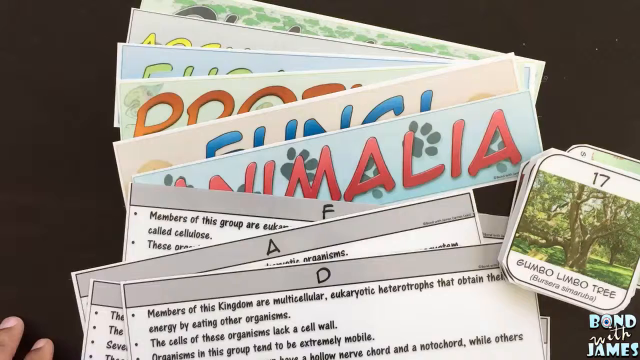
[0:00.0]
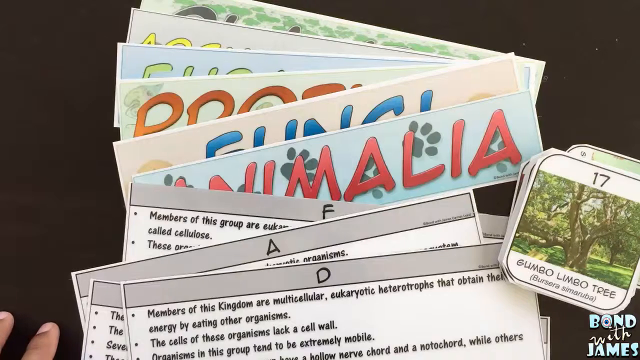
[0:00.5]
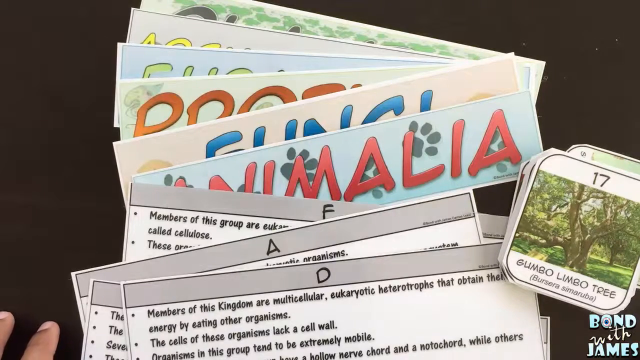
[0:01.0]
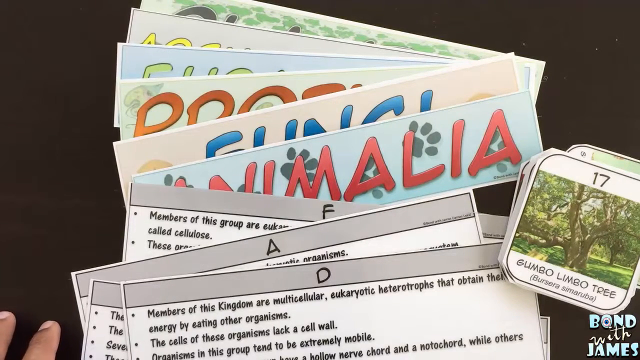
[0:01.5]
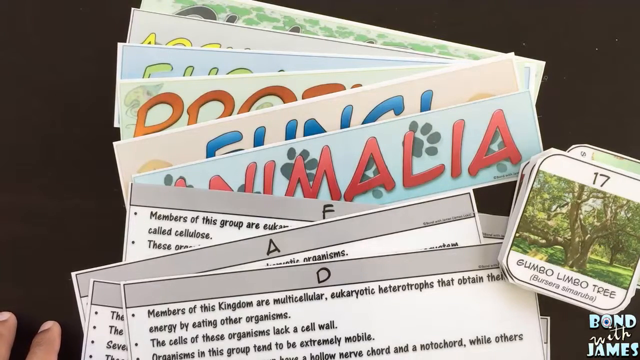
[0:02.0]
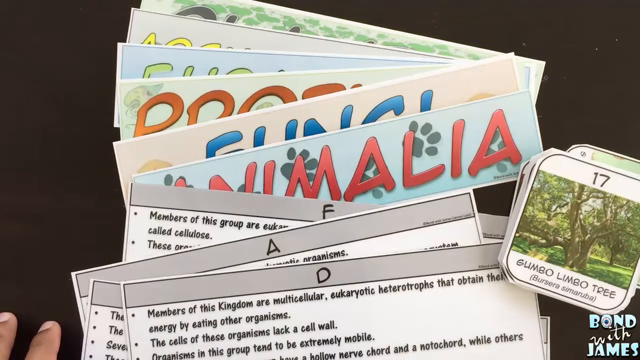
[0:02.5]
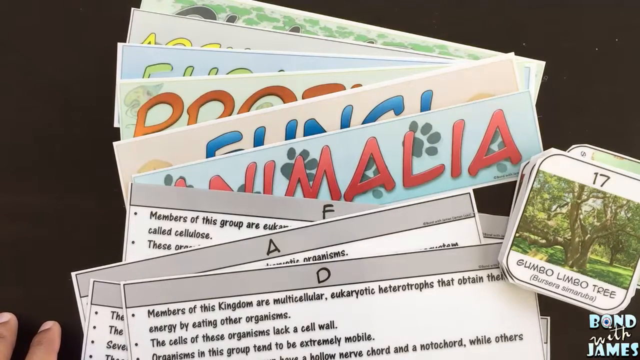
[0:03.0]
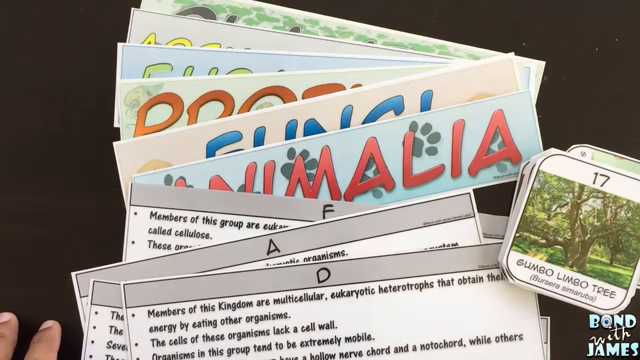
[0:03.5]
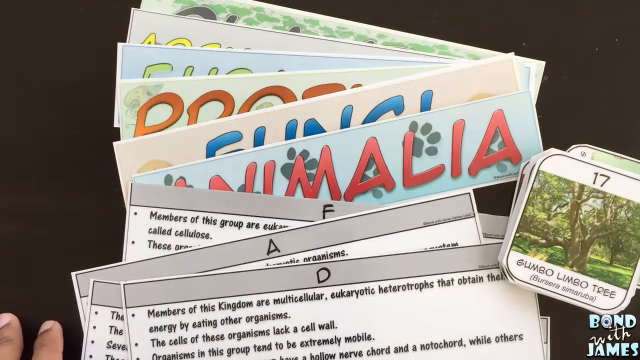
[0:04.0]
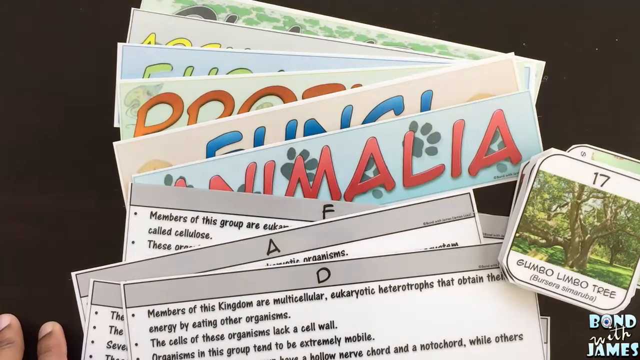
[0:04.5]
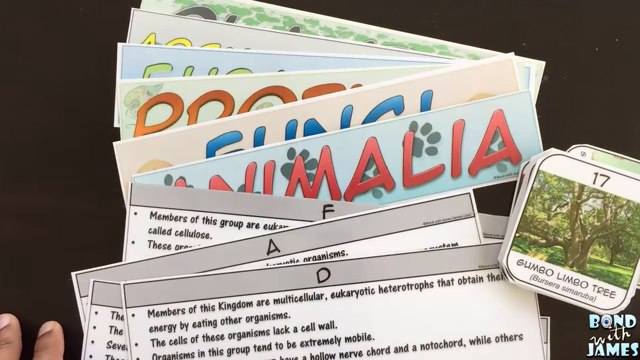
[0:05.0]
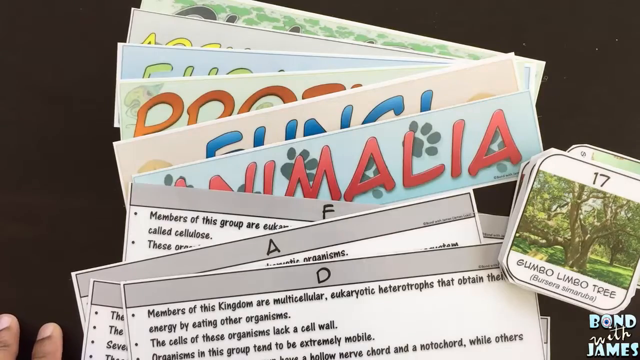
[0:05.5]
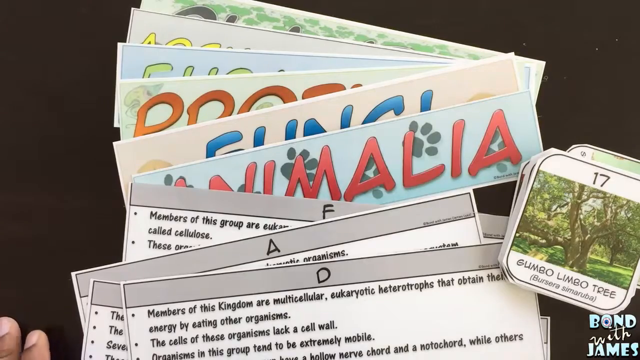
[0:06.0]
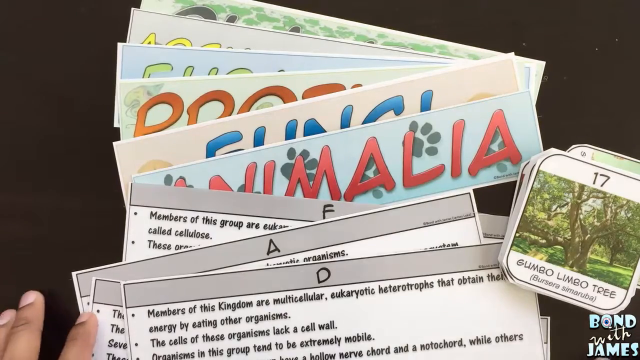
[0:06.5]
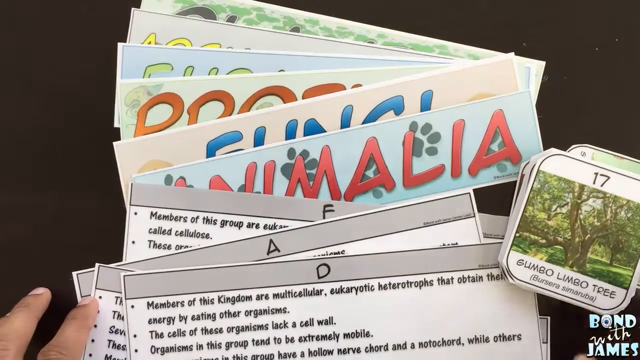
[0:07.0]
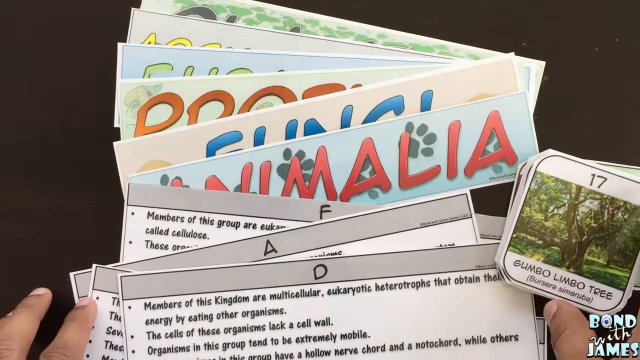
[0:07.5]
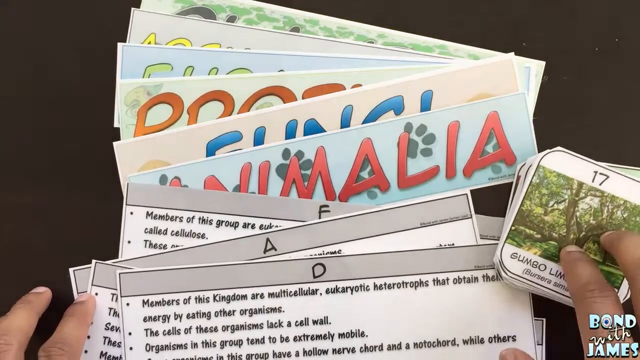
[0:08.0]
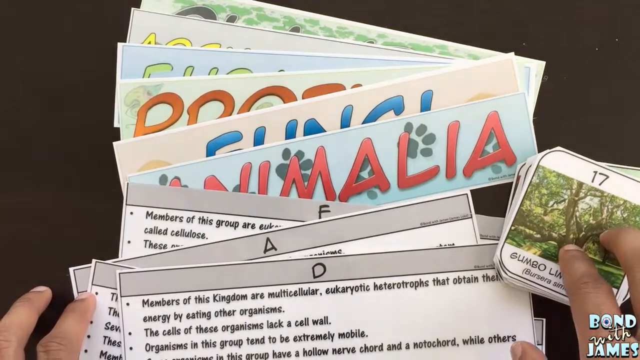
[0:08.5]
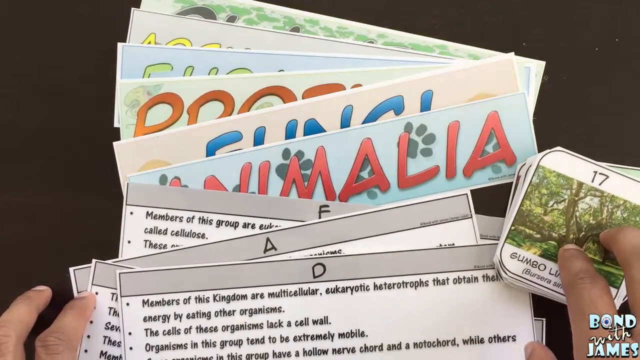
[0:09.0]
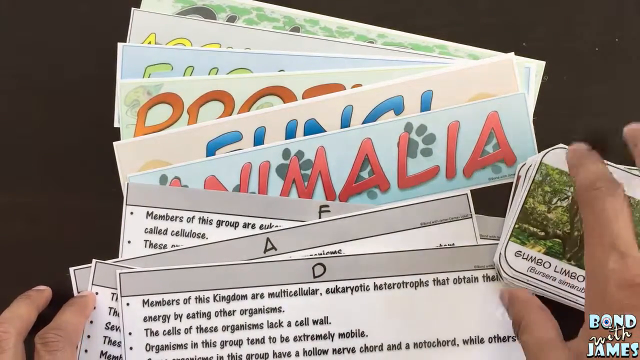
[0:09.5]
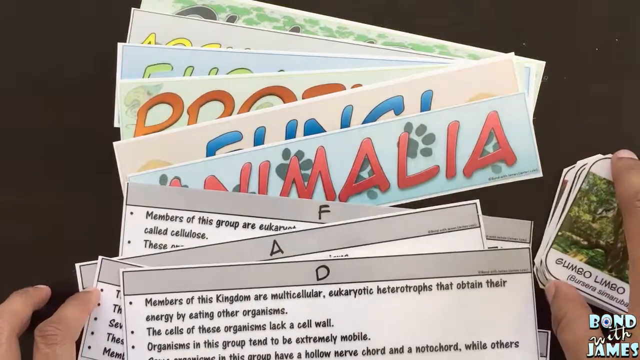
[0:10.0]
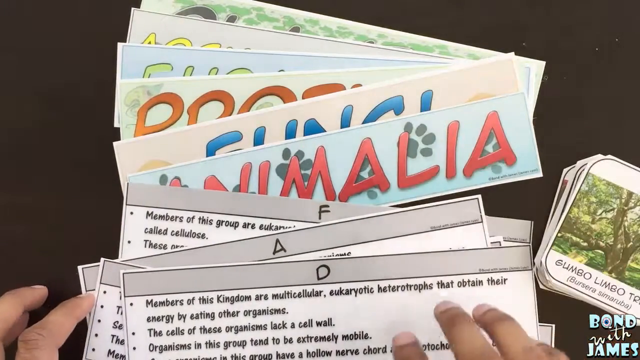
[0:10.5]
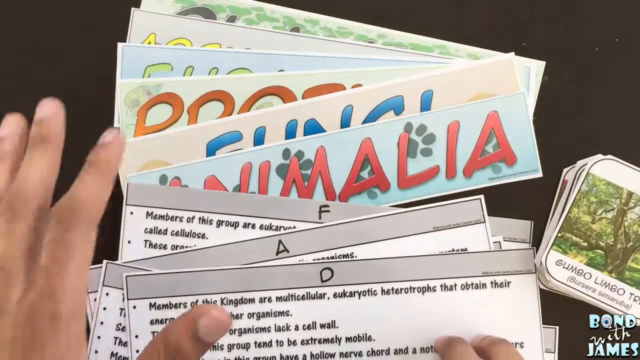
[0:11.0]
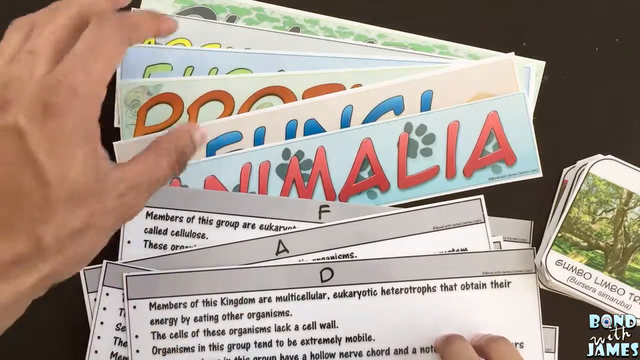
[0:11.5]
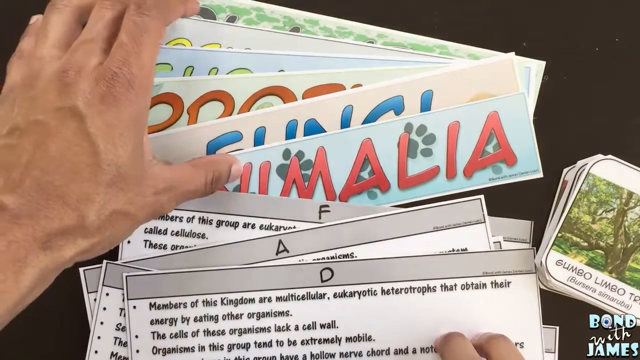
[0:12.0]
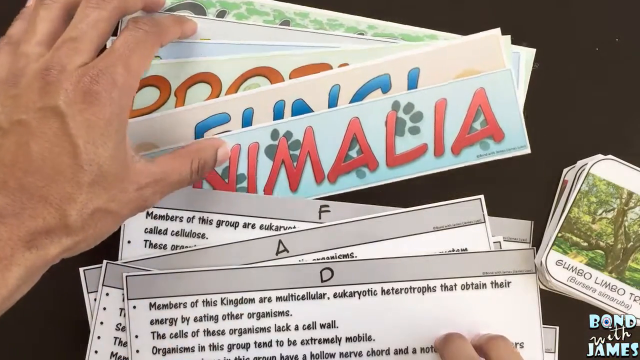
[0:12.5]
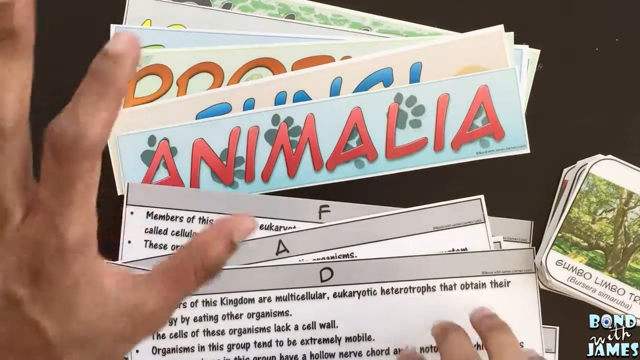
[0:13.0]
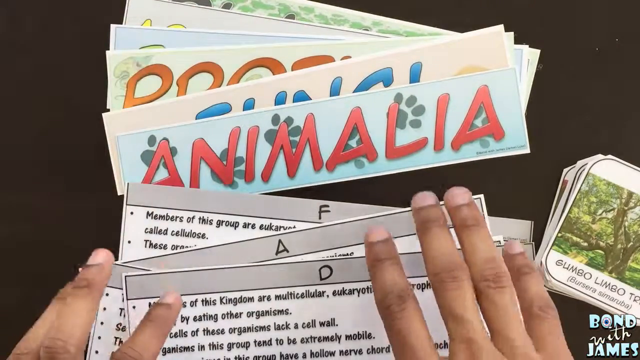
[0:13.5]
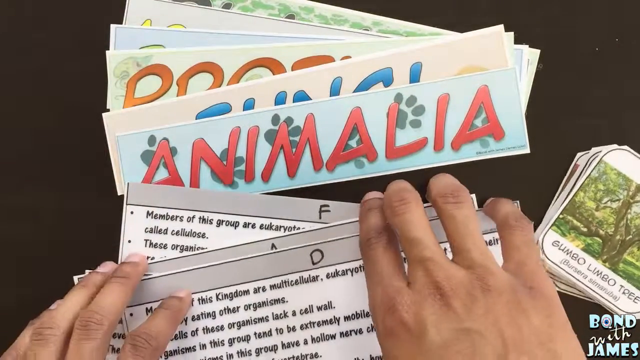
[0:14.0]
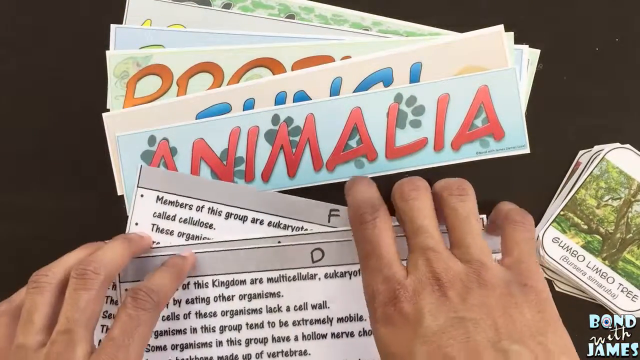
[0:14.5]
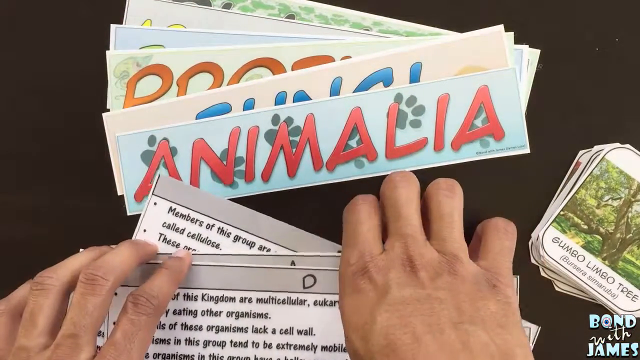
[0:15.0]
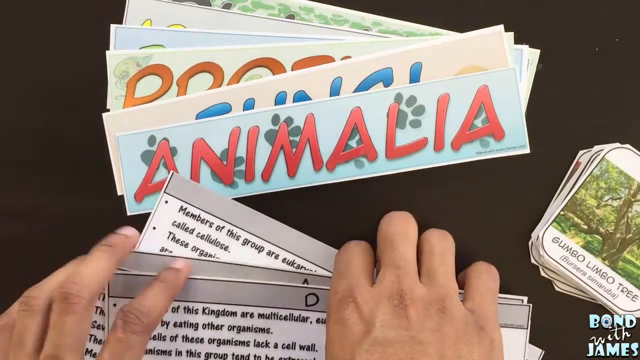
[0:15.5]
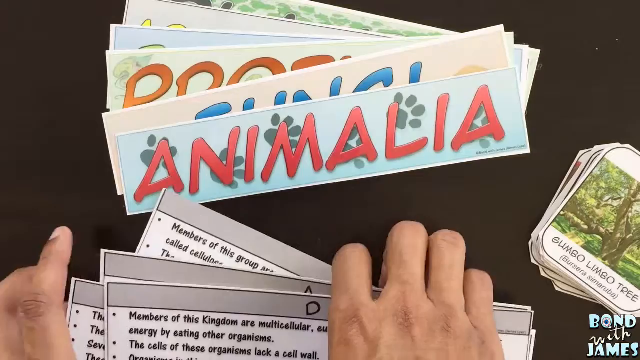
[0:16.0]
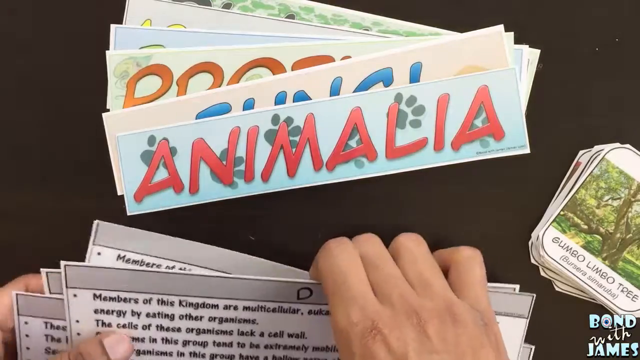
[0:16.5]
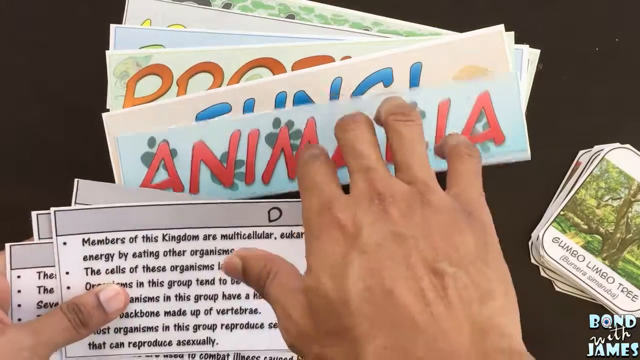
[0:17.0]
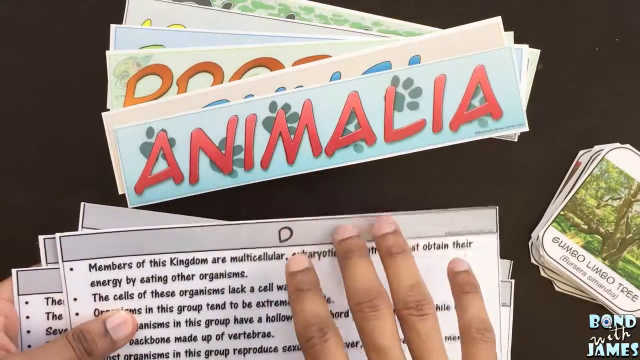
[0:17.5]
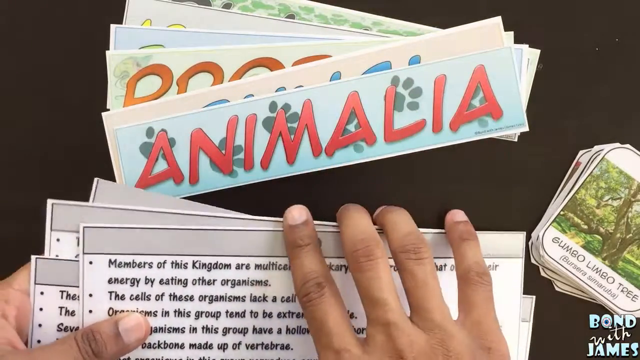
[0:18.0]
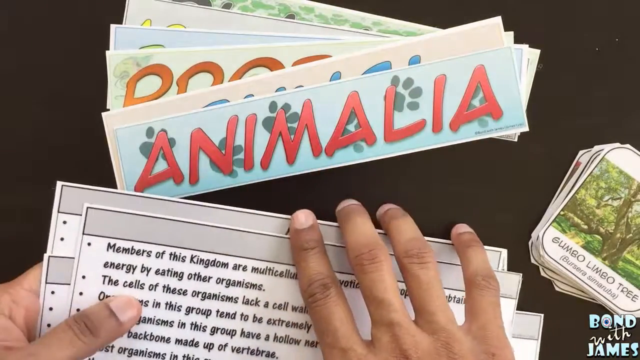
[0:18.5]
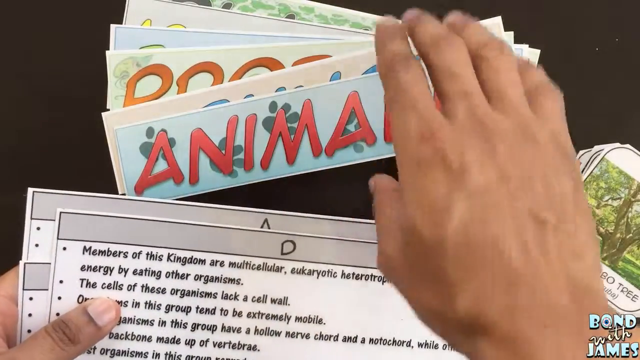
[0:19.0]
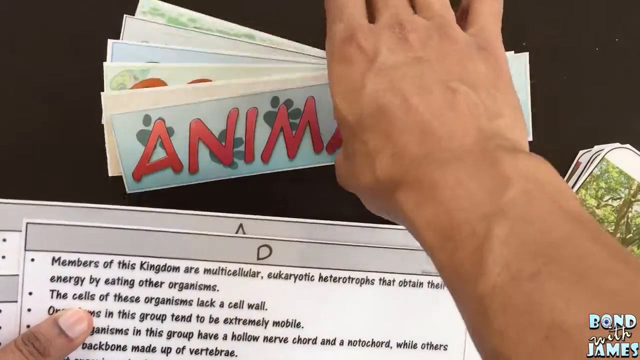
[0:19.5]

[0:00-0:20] A group of papers is scattered on a table, and the papers differ from one another. On the far right are short, small posters showing a picture of a tree, with "Gambo Limbo 3" written under it and "17" labeled on top. In the center of the table are more scattered papers. Some are black and white and contain a lot of information and bullet points; these have letters on top of them, including a paper with a G, one with an A and one with an F. On top of them are colorful papers: one is written all in red on a blue background with cat footprints, another is written in blue on a peach background, and the one below that is written in red on a green background. The papers have different backgrounds. Someone then uses two hands to rearrange the papers. First he takes the smallest papers with the tree images and moves them to the side, far on the right. He then uses his left hand to move the colorful papers, then uses both hands to move the black and white papers, and then appears to take the black and white and colorful papers.